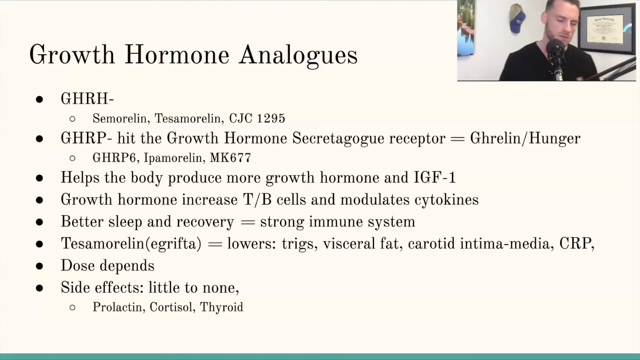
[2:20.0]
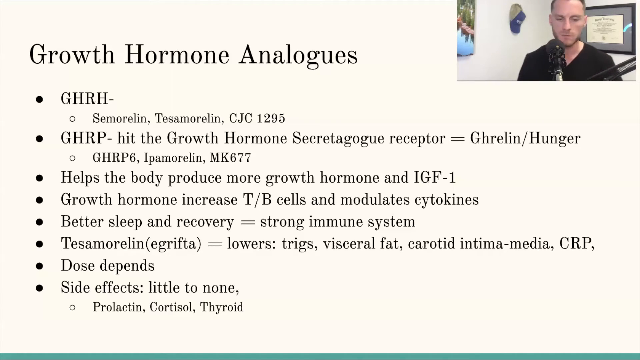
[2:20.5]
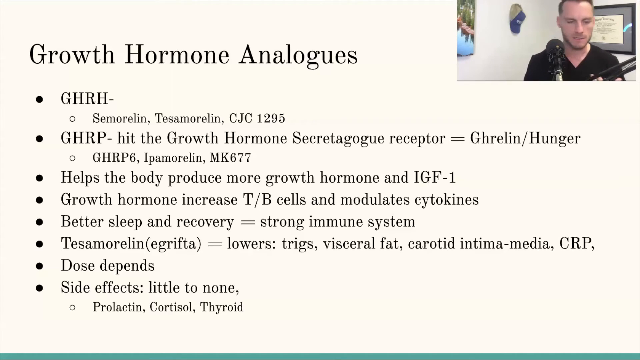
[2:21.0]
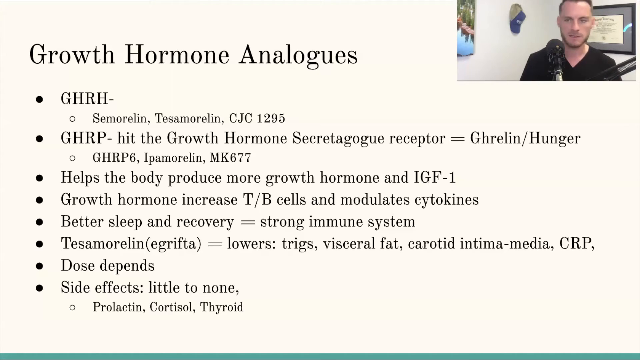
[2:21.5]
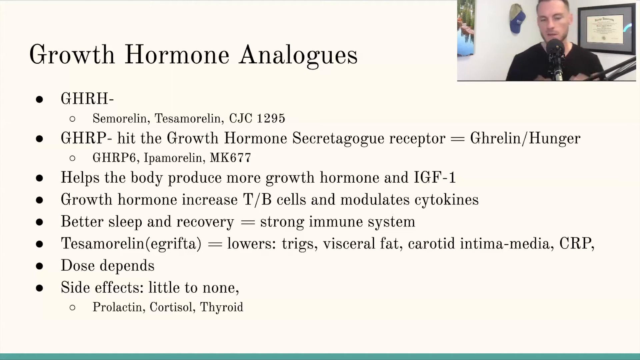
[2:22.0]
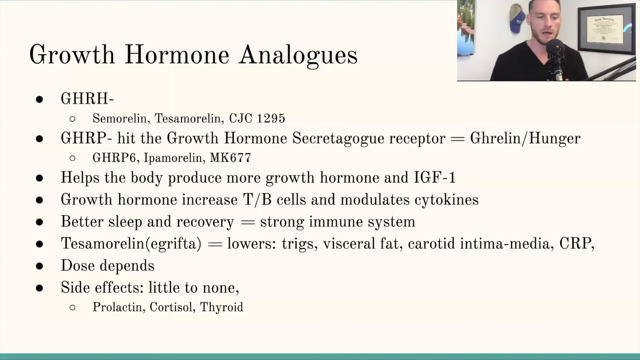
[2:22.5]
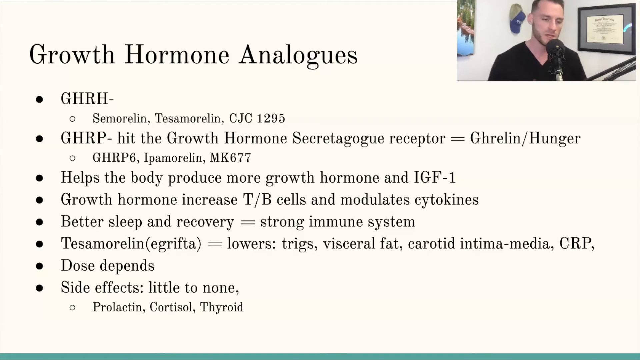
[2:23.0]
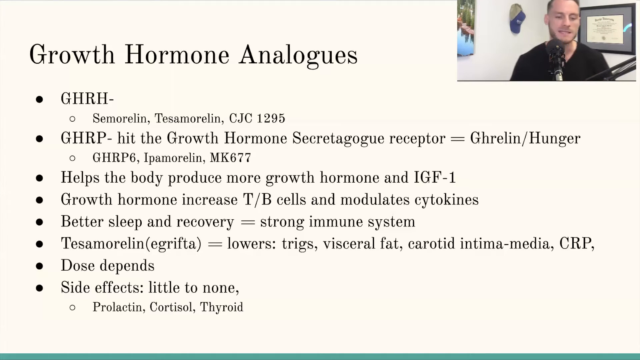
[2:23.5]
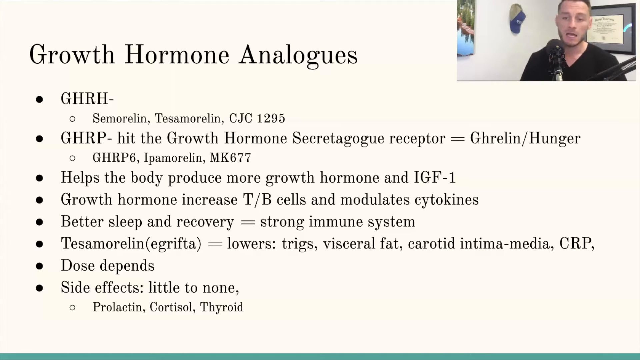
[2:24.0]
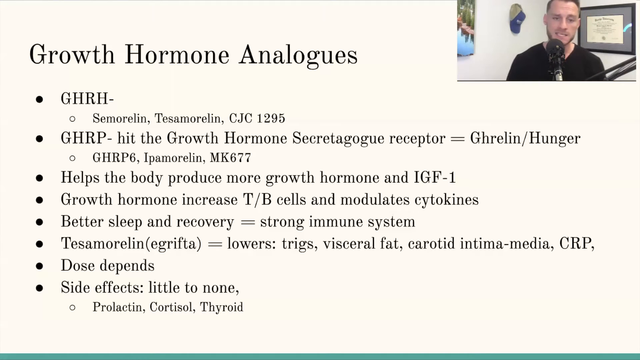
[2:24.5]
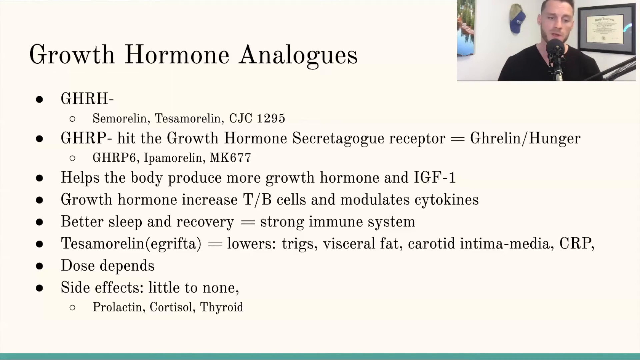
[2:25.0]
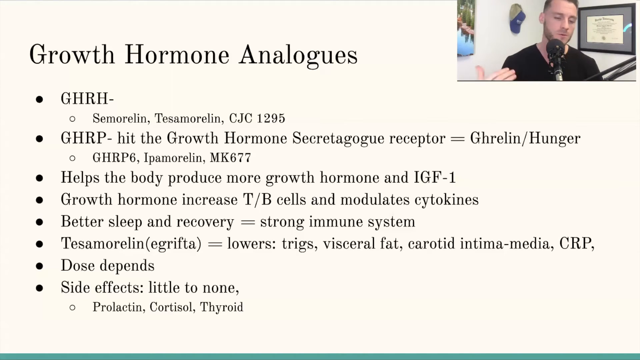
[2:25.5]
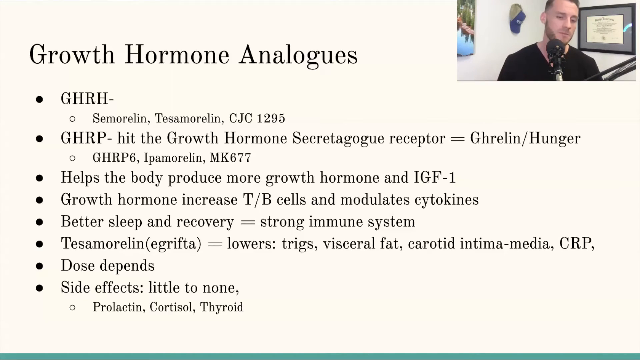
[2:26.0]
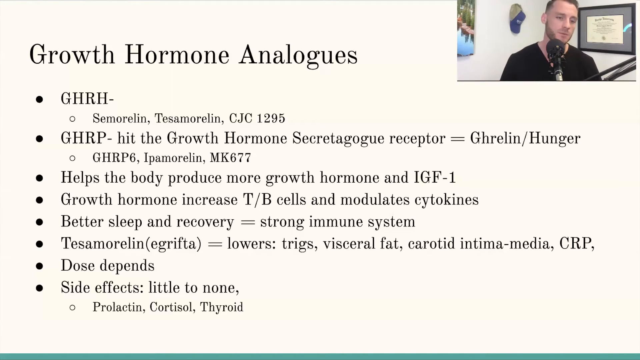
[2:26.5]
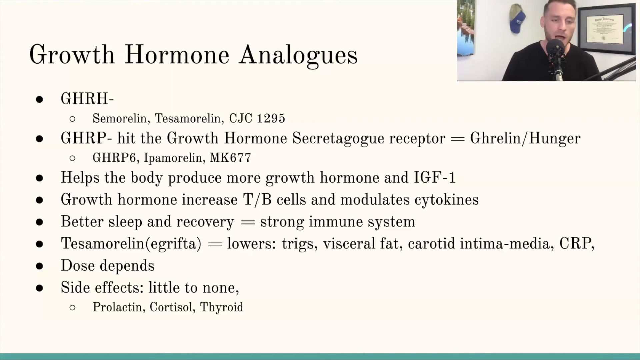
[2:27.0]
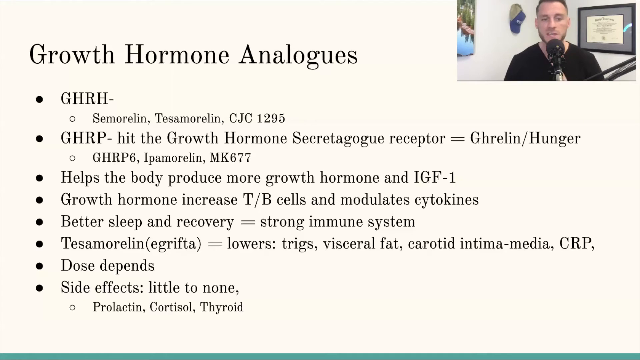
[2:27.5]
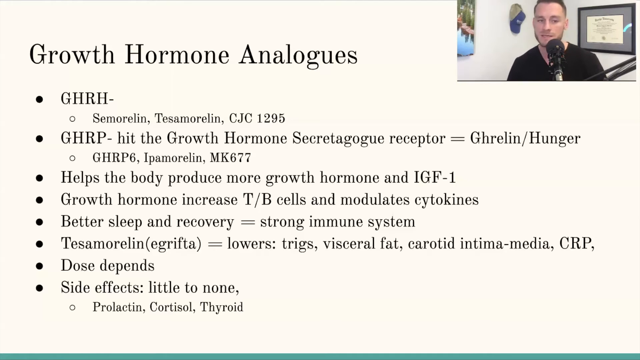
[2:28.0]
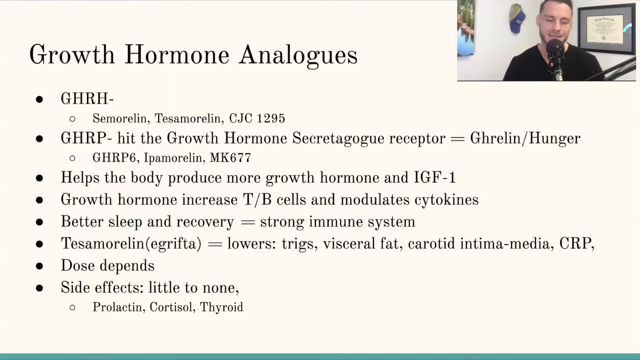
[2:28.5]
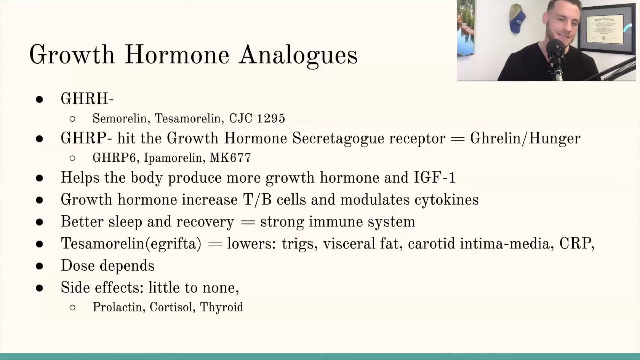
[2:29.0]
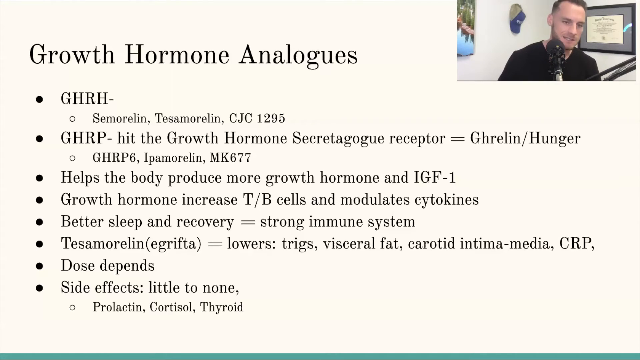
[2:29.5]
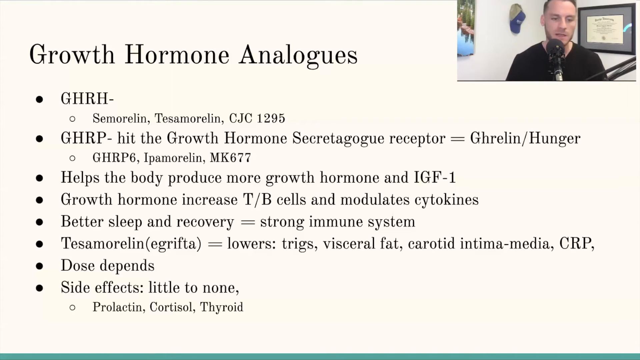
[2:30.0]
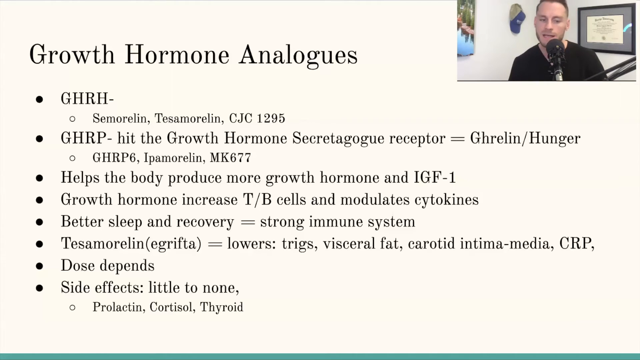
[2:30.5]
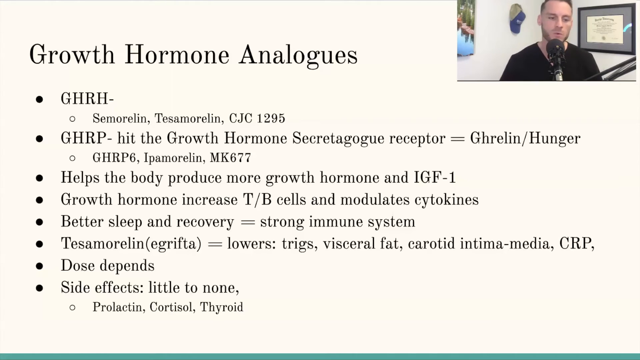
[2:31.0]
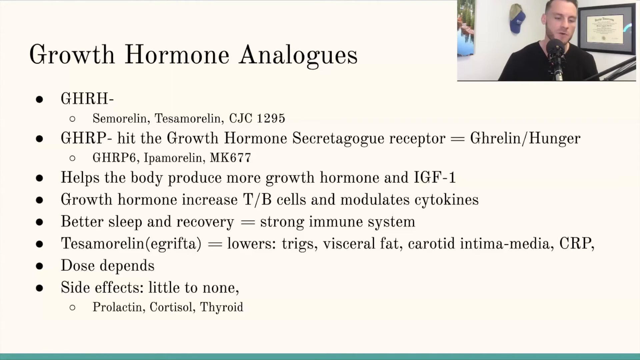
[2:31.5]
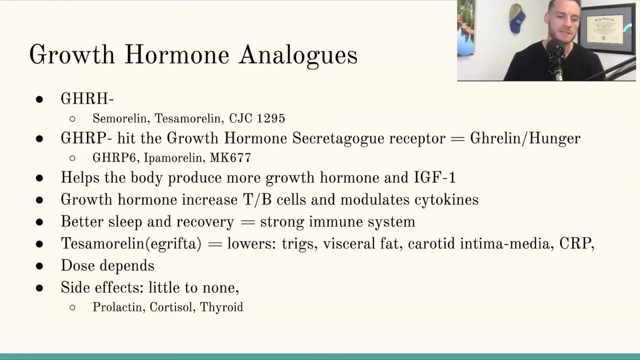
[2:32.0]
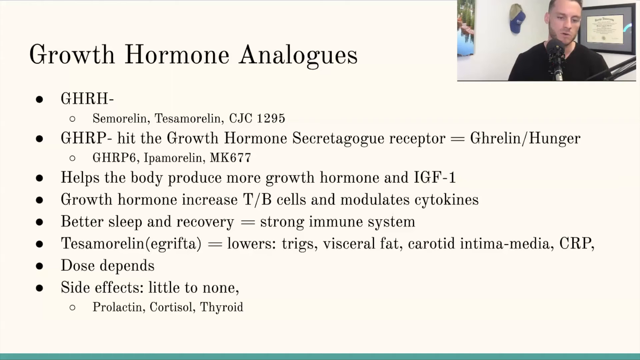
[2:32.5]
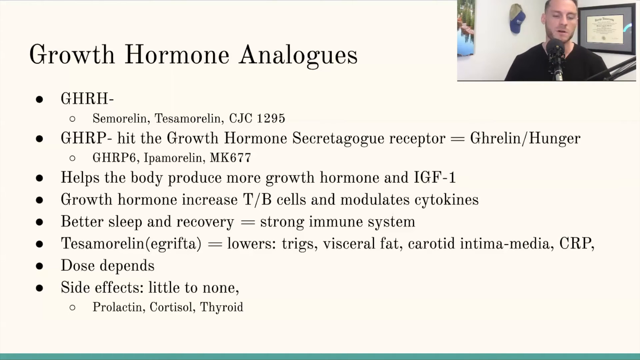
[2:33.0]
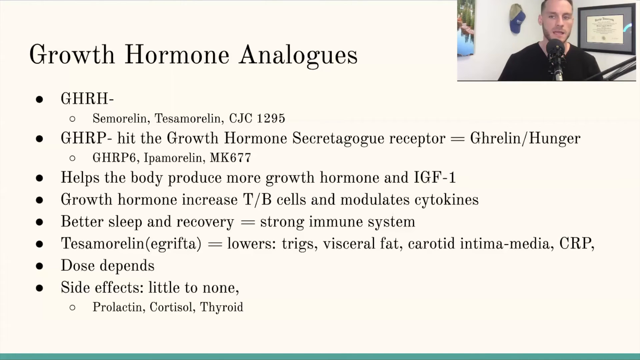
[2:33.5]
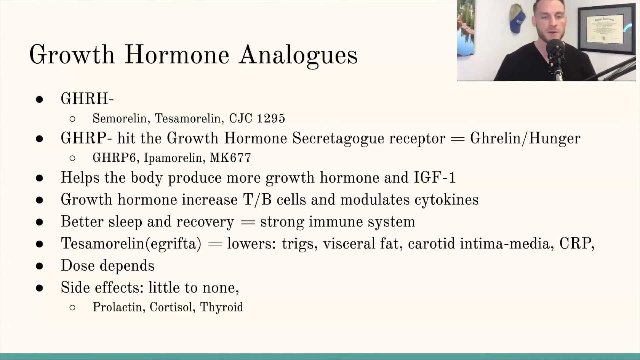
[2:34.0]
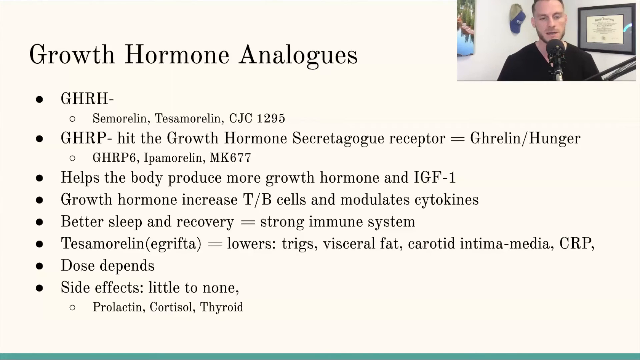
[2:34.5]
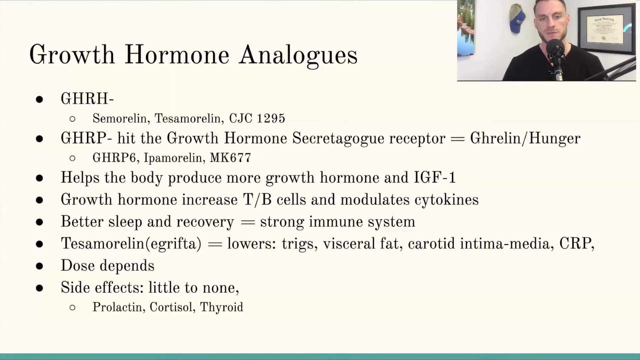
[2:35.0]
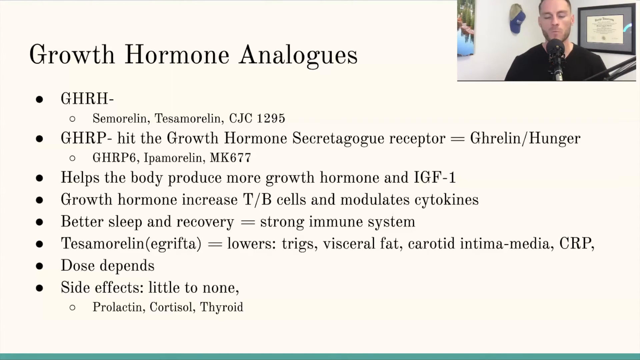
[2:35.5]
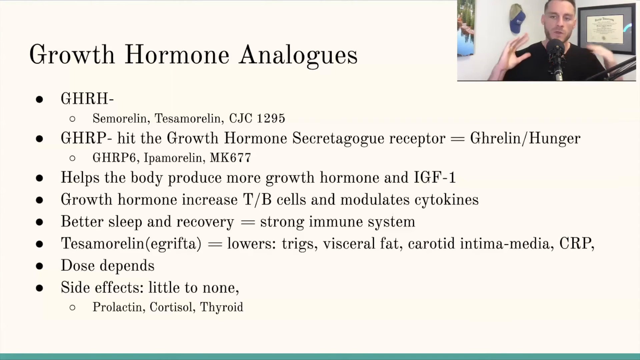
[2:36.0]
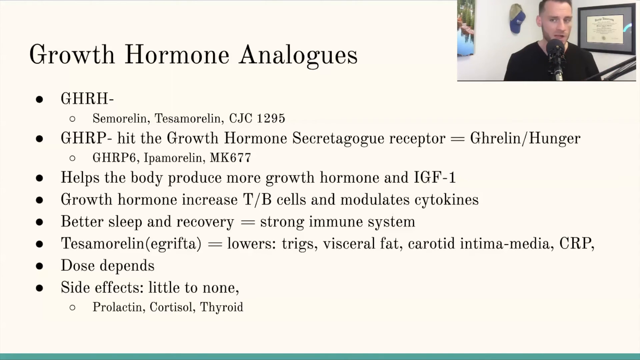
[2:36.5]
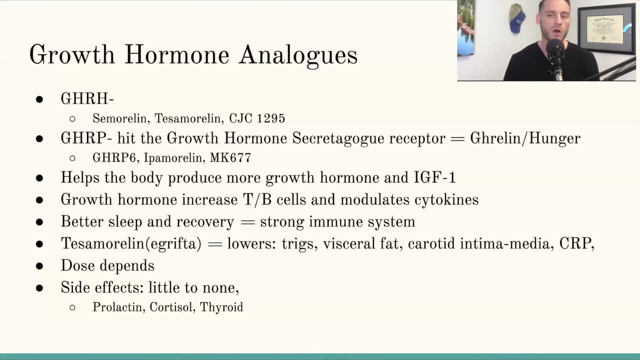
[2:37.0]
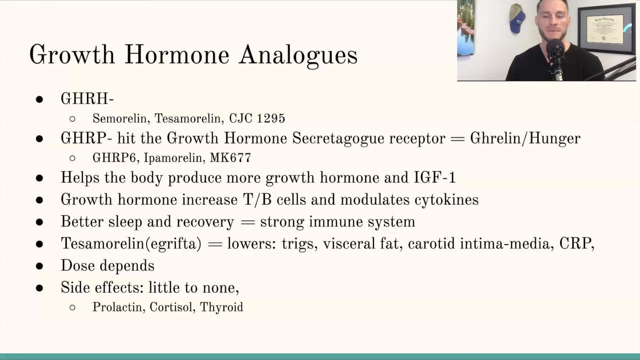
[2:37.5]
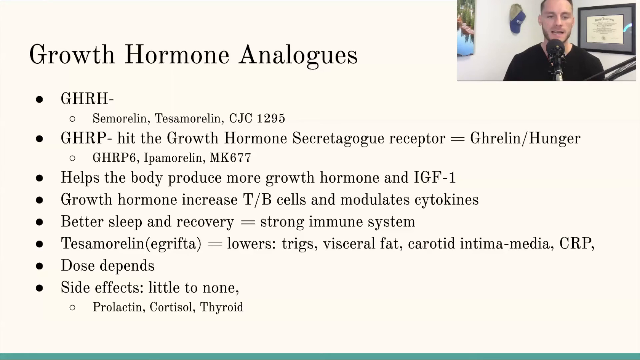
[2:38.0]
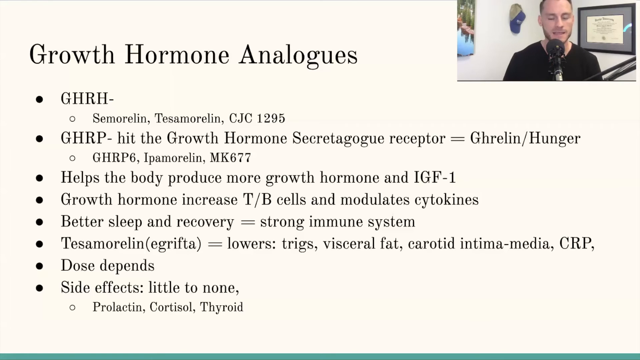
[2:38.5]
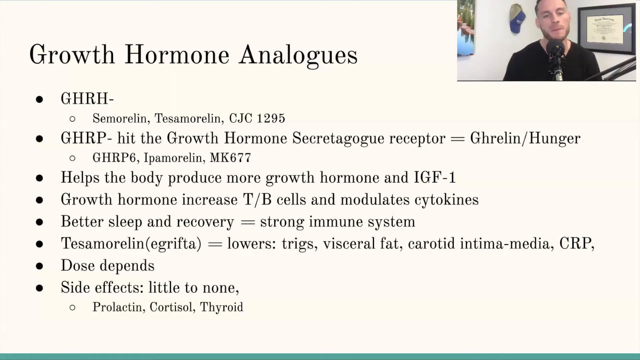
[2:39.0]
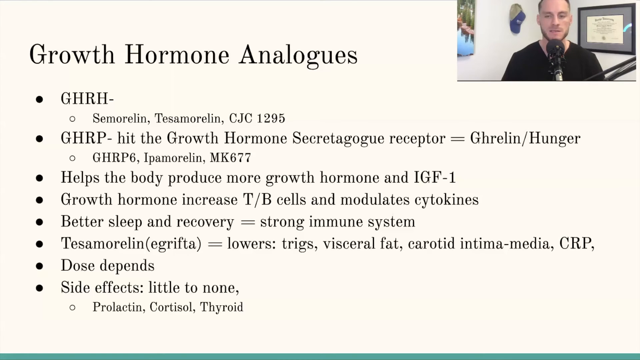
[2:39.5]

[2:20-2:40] The man in the top right of the webinar screen continues talking into the microphone. He moves a little from side to side, bobs his head a little and keeps using hand gestures. The same growth hormone analogue slide is still shown, and he keeps talking at a constant, fairly fast rate.